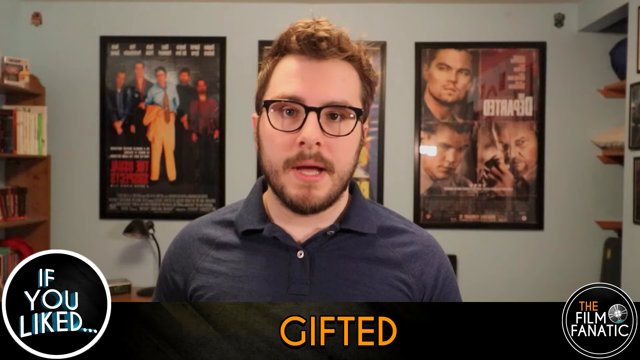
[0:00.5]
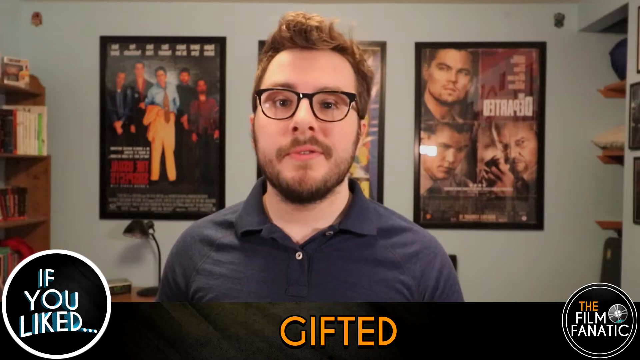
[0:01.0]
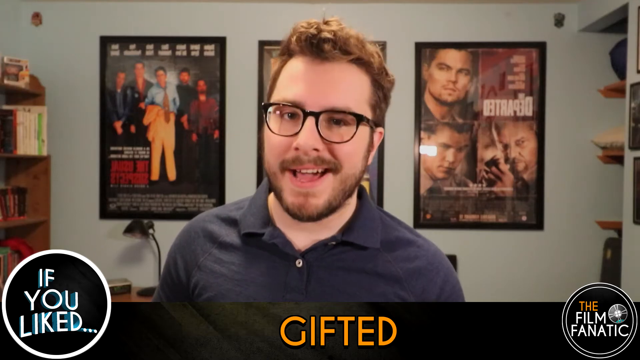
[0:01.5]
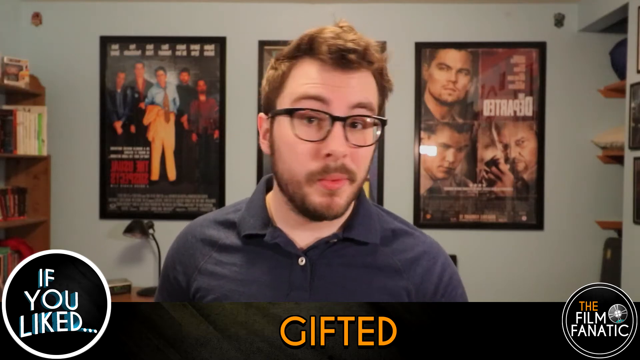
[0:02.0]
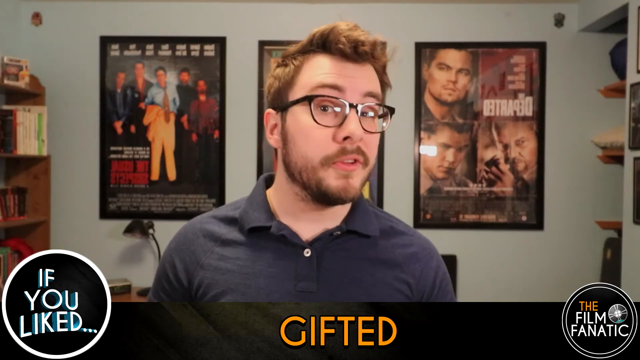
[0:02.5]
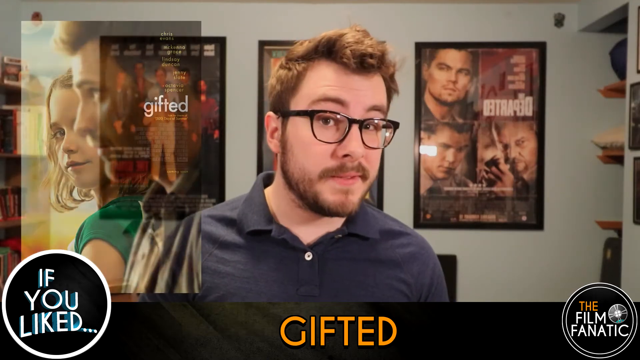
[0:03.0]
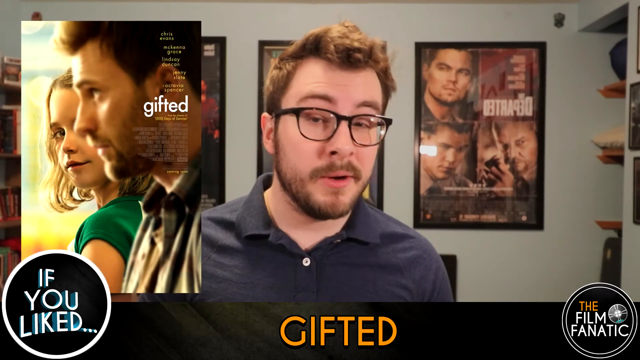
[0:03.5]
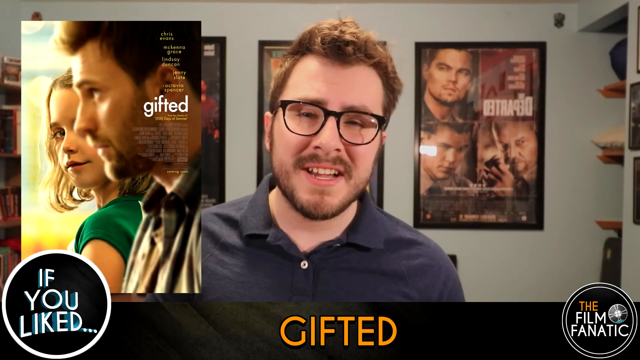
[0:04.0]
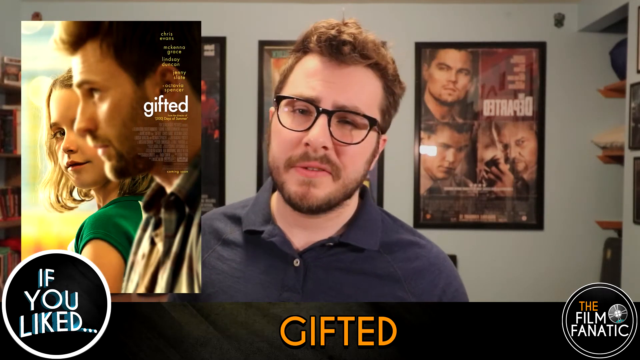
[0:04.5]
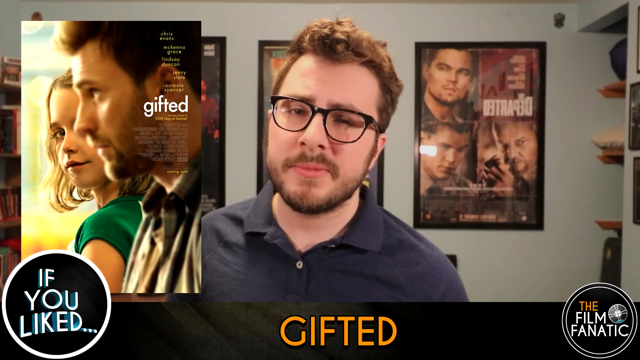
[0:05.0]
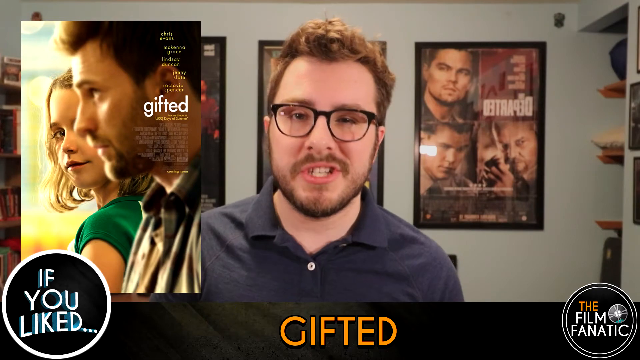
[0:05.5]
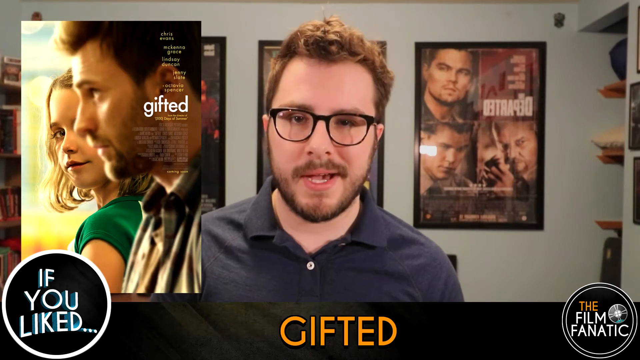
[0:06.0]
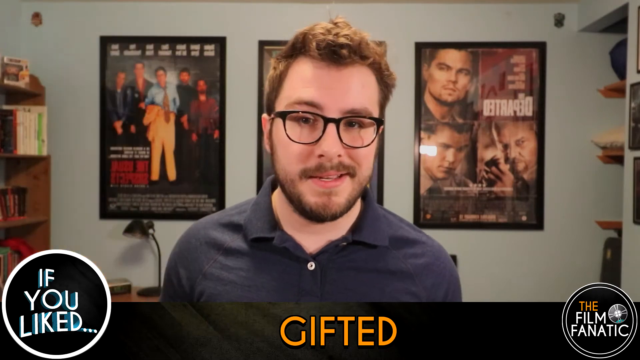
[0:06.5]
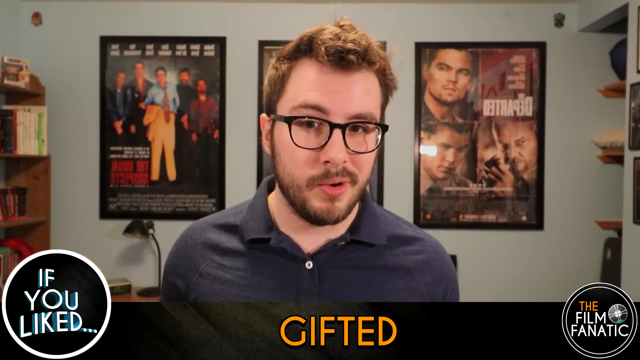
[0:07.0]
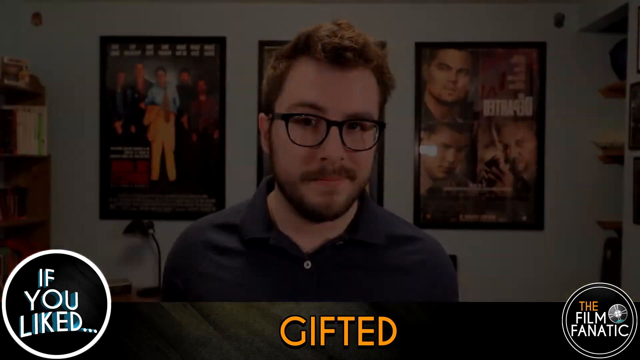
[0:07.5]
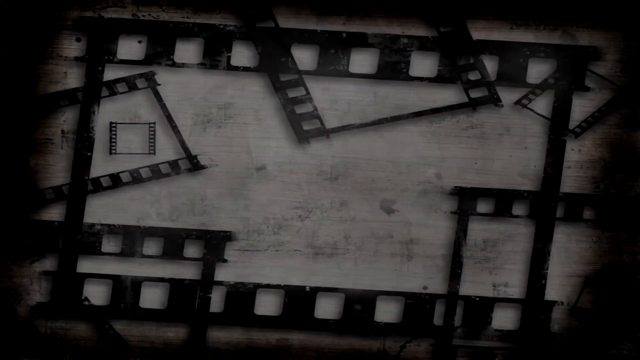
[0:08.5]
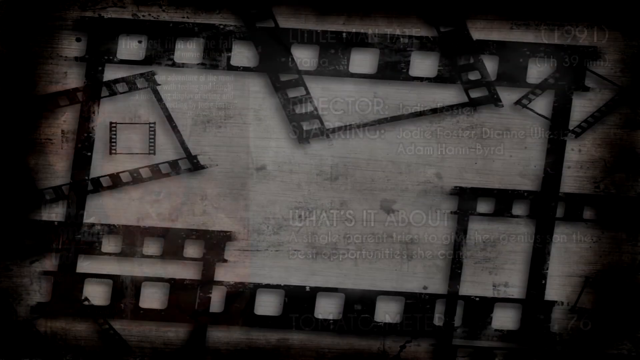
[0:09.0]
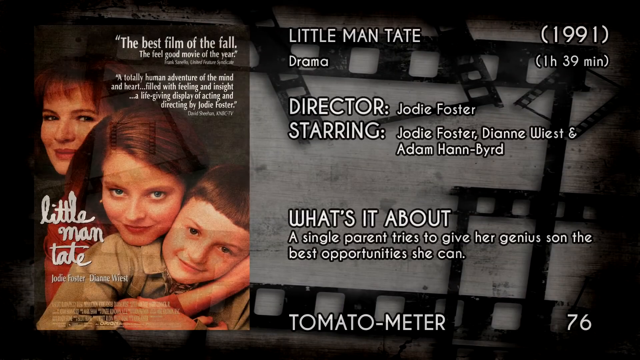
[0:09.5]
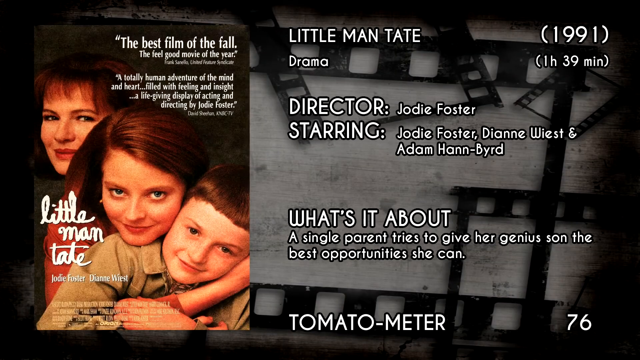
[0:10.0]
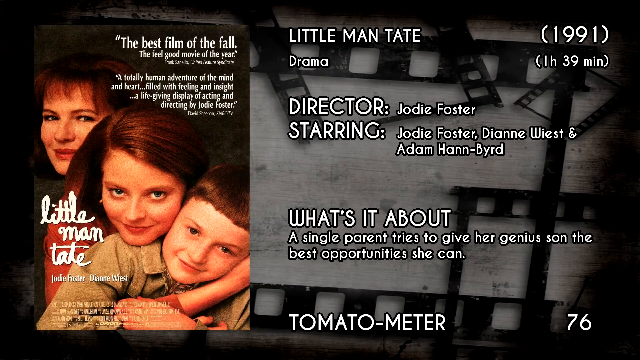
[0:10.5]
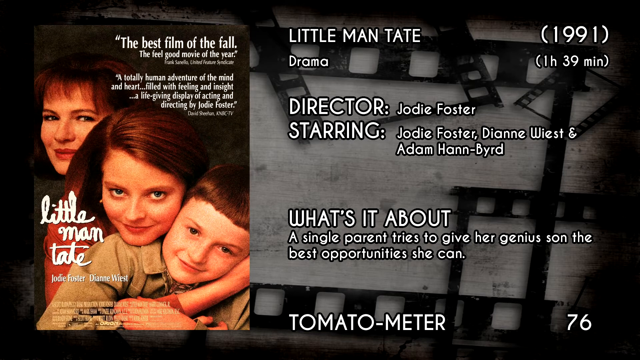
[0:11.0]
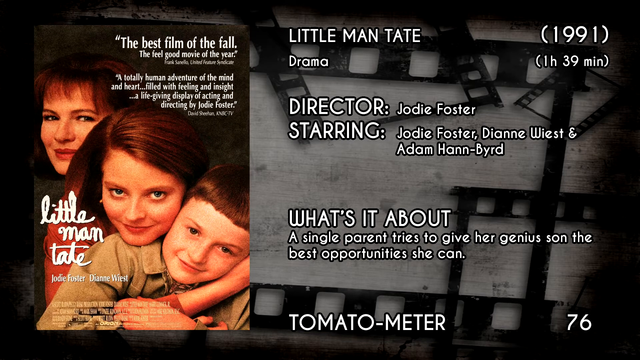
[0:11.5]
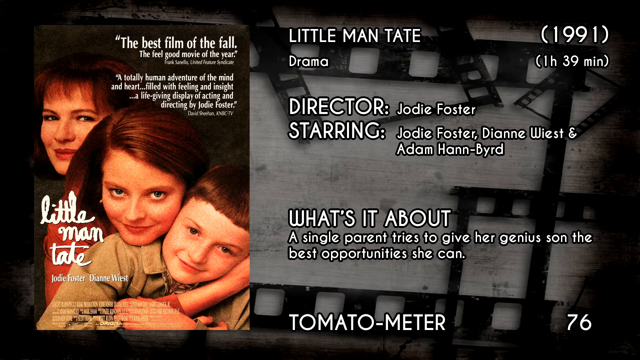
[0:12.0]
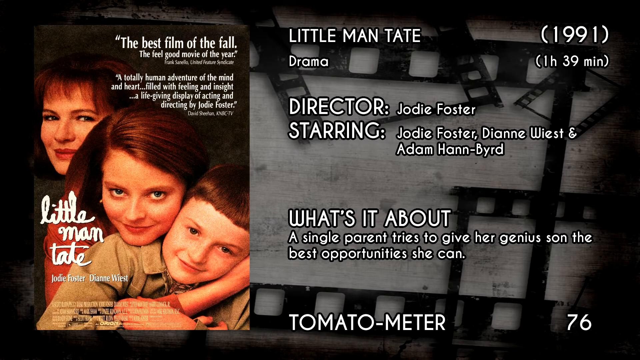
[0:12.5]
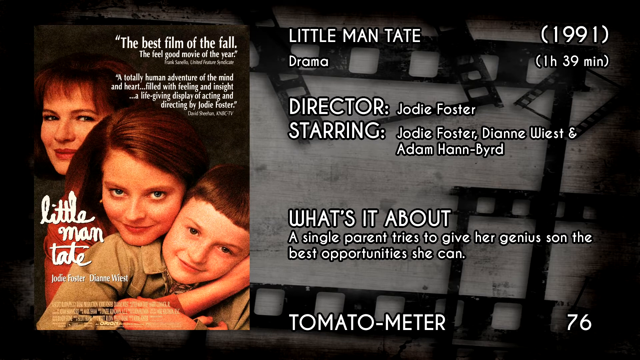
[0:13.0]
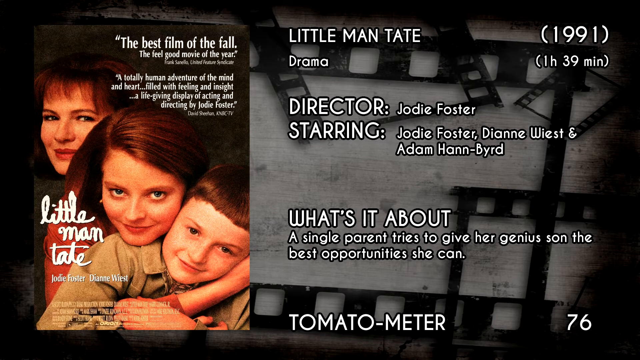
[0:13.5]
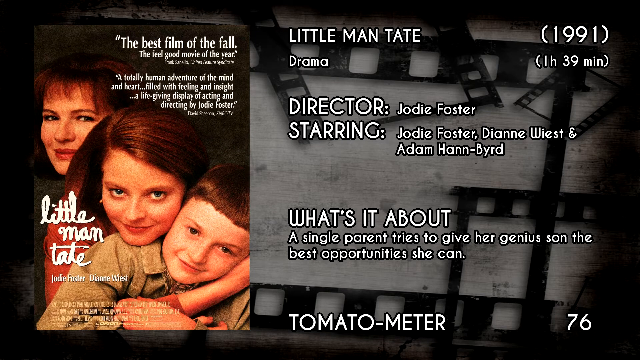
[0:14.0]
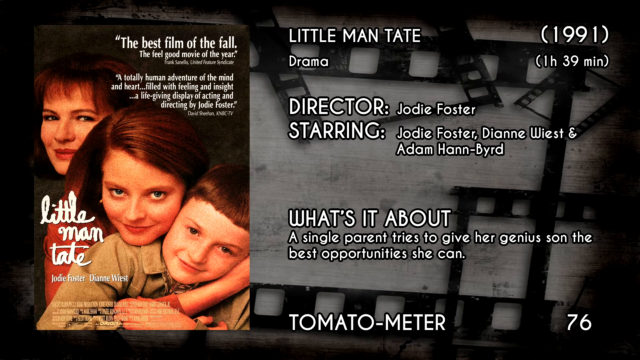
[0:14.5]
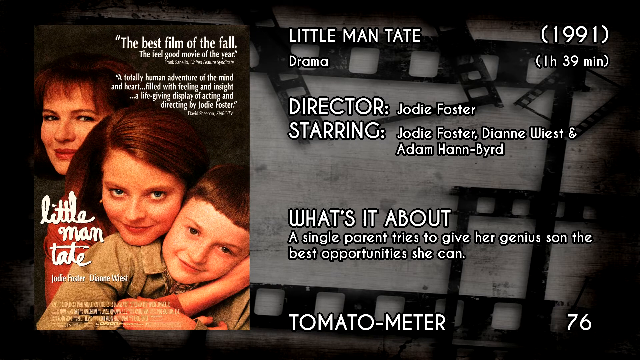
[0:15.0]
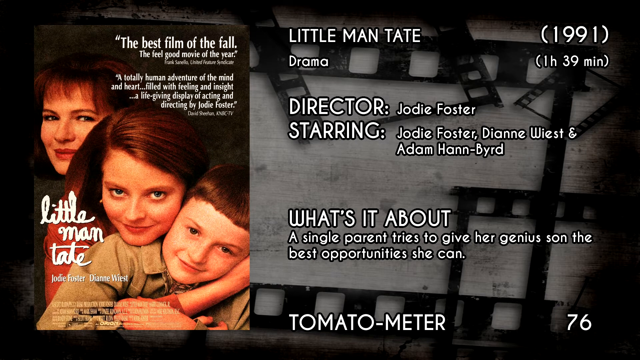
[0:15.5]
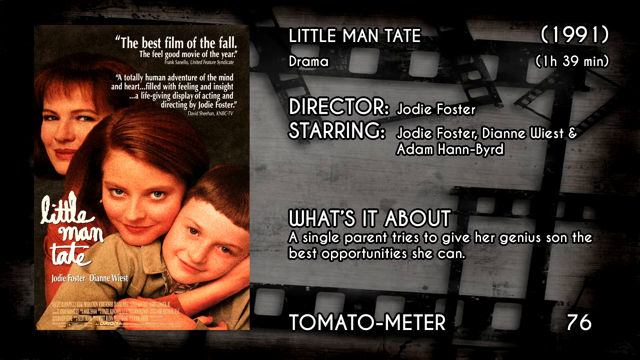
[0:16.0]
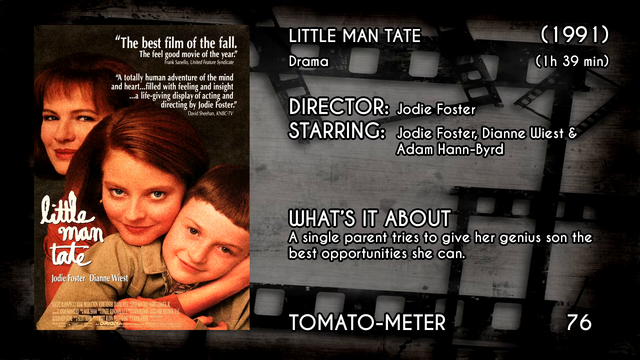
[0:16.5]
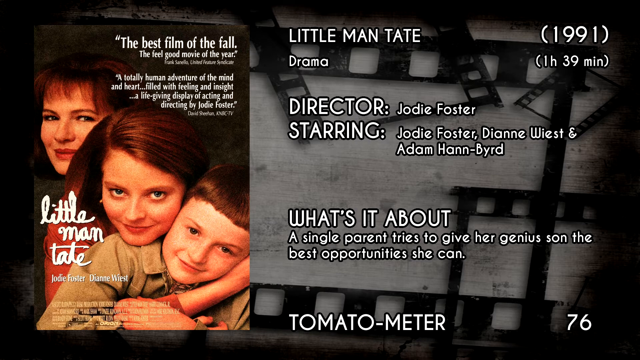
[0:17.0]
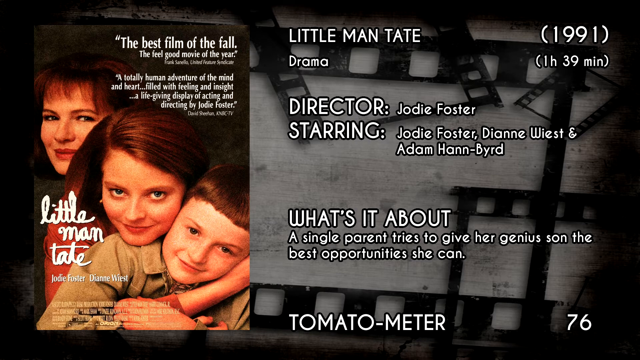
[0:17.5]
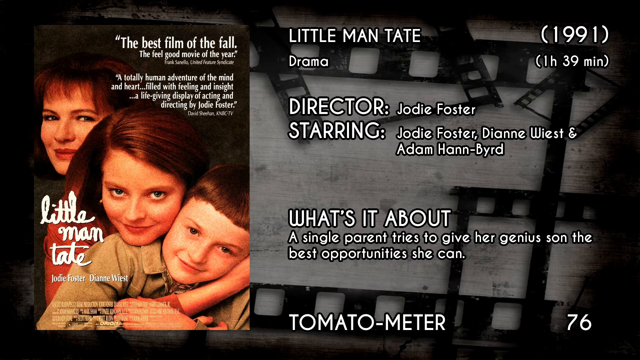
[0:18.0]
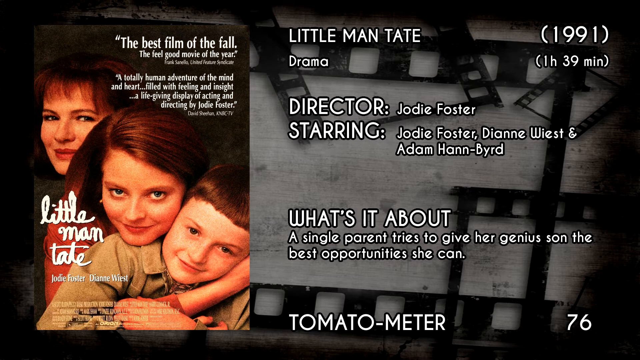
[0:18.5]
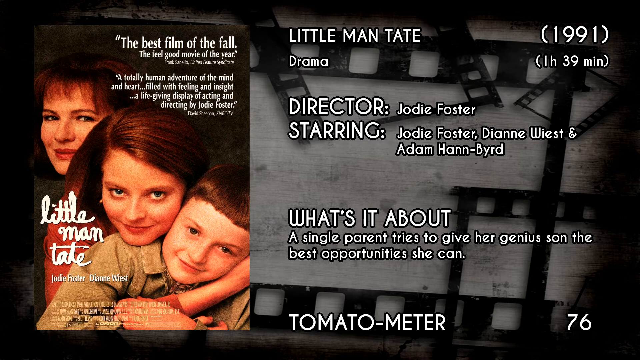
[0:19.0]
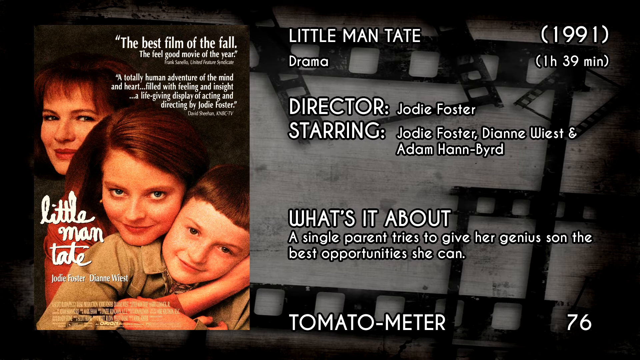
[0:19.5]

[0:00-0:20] A man with short blond hair appears to be presenting a movie called Little Man Tate. It is listed as a drama directed by Jodie Foster, released in 1991, and 1 hour 30 minutes long. The movie's cover picture appears to show a mother, a daughter and a son. A description says the movie is about a single parent who tries to give a junior son the best opportunity she can. The background is gray, and the word Tomatometer is also written there.